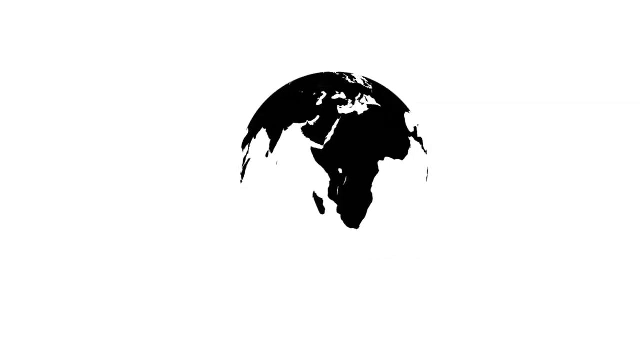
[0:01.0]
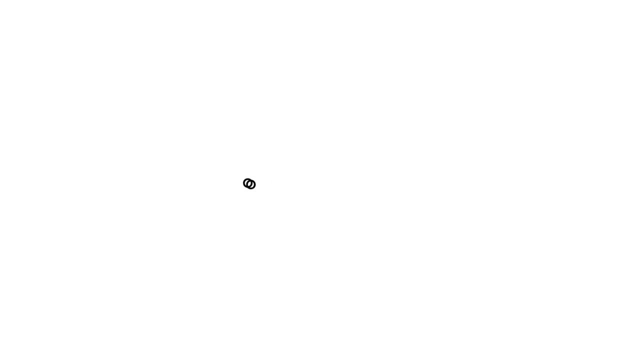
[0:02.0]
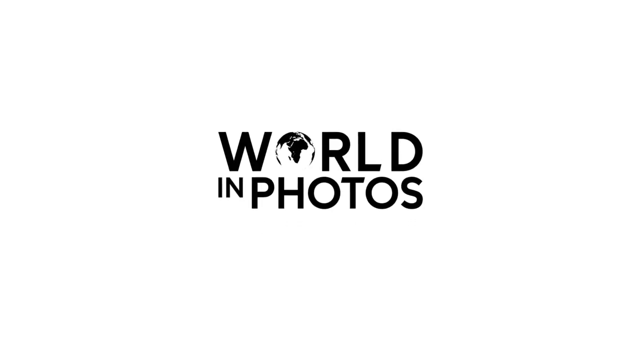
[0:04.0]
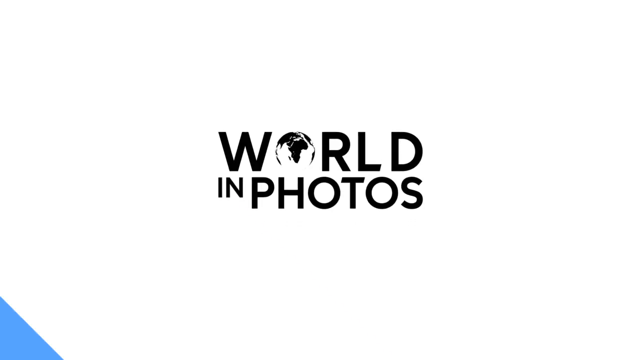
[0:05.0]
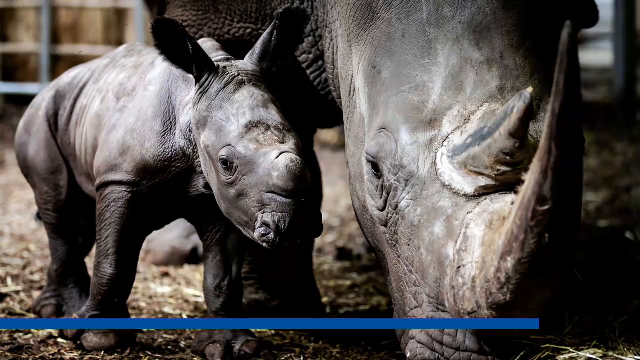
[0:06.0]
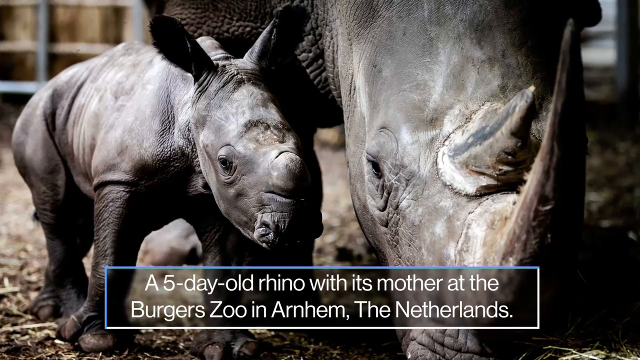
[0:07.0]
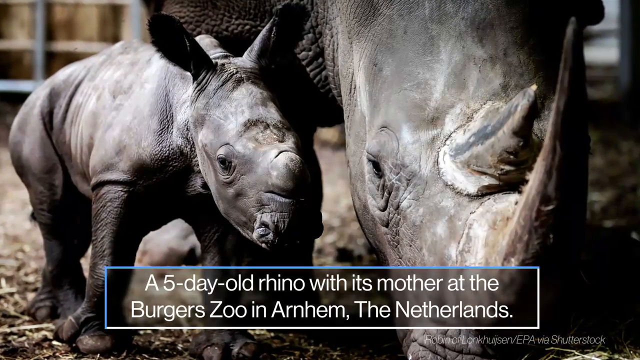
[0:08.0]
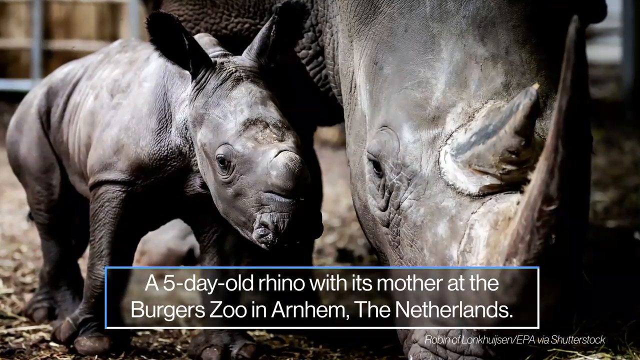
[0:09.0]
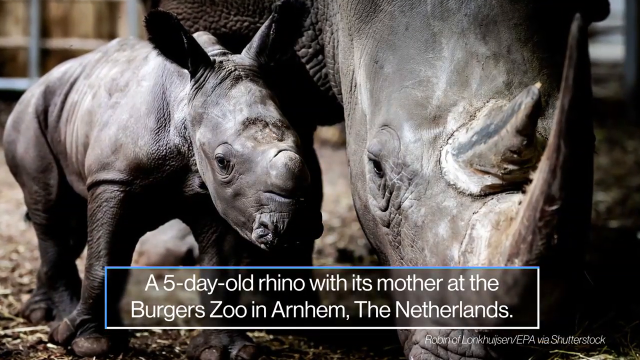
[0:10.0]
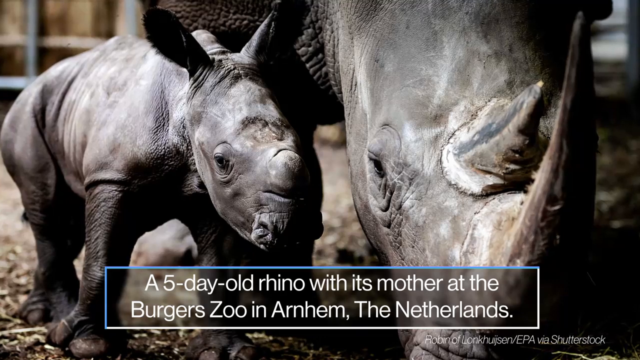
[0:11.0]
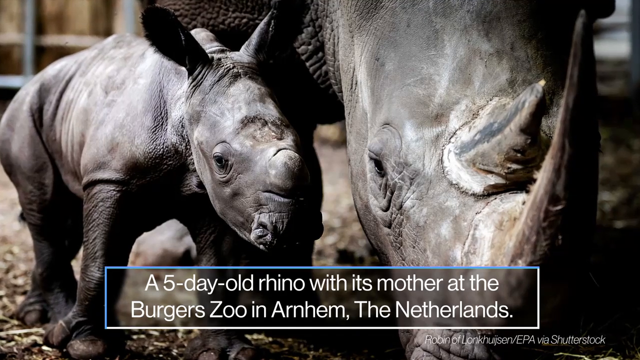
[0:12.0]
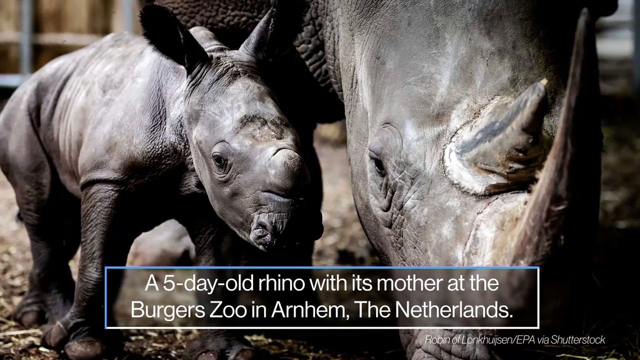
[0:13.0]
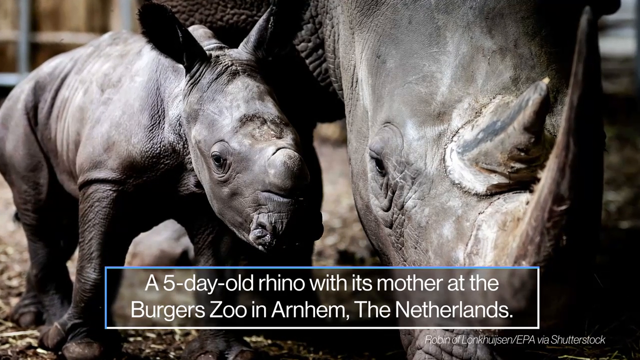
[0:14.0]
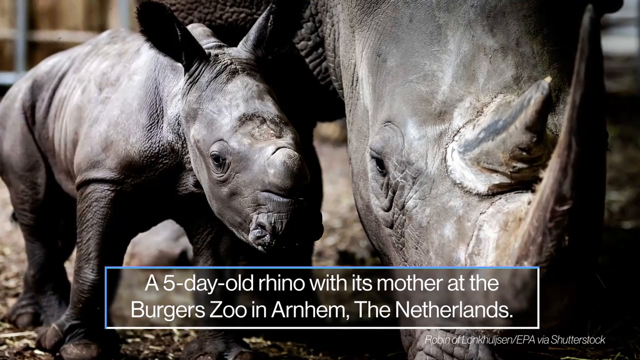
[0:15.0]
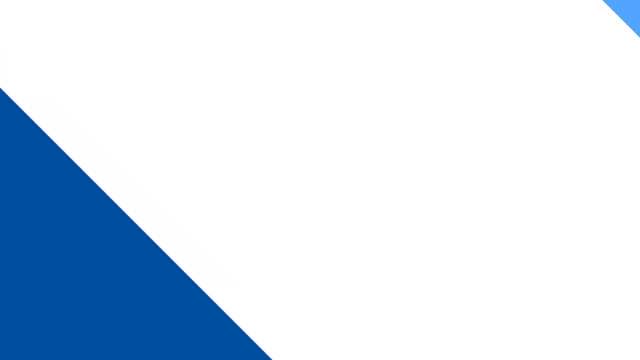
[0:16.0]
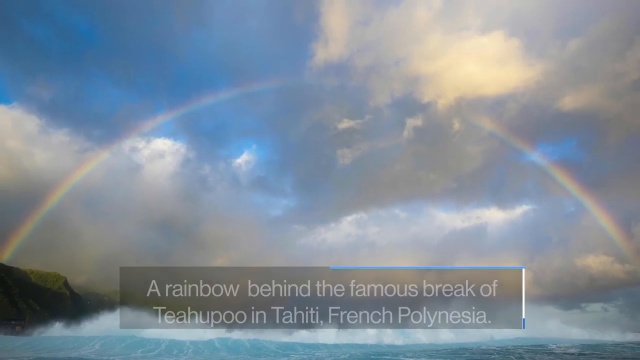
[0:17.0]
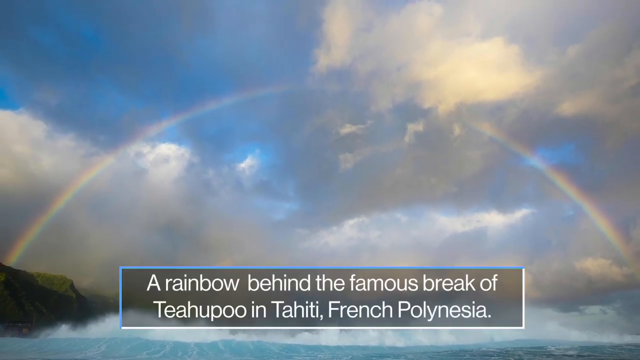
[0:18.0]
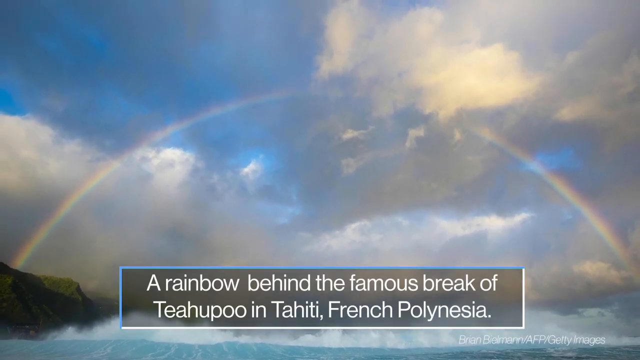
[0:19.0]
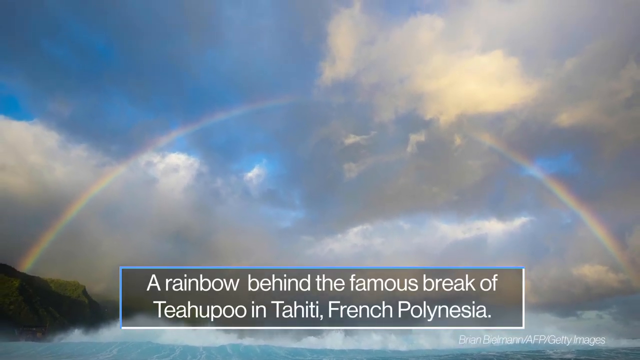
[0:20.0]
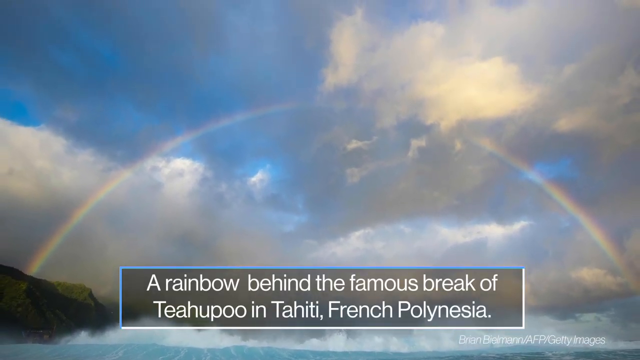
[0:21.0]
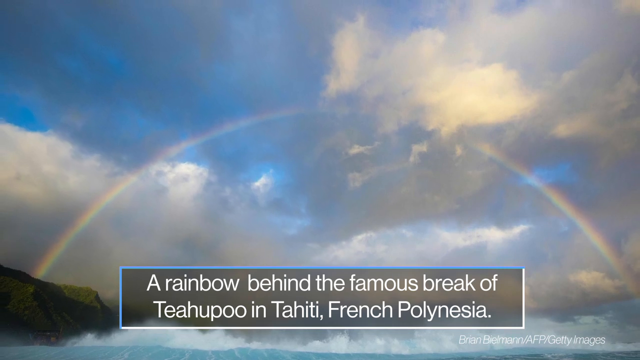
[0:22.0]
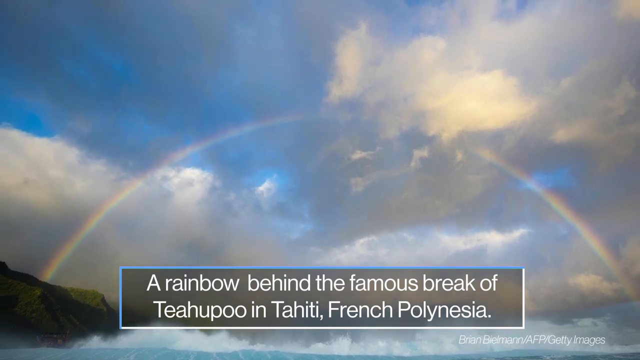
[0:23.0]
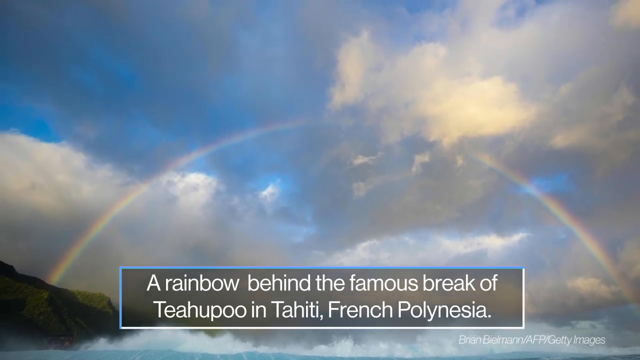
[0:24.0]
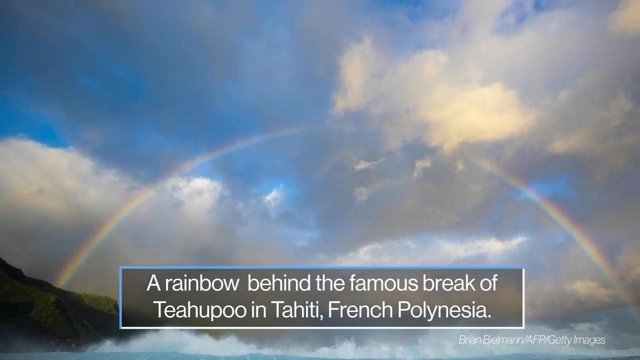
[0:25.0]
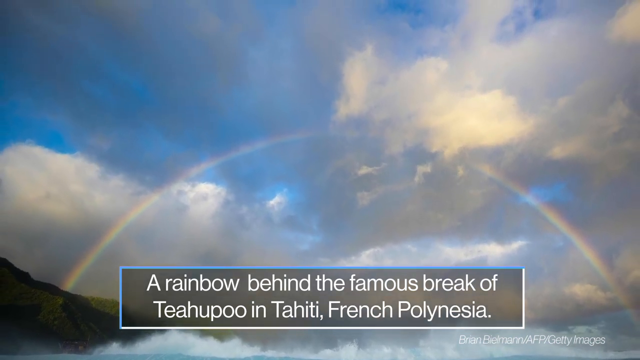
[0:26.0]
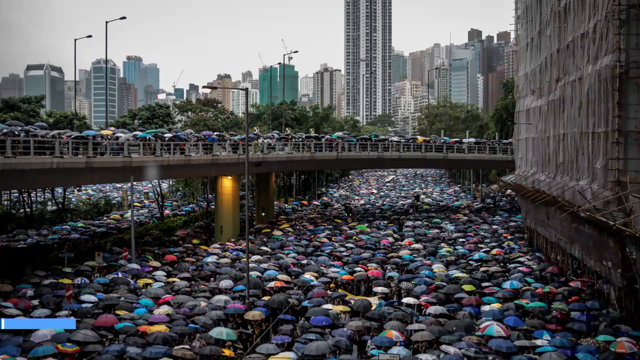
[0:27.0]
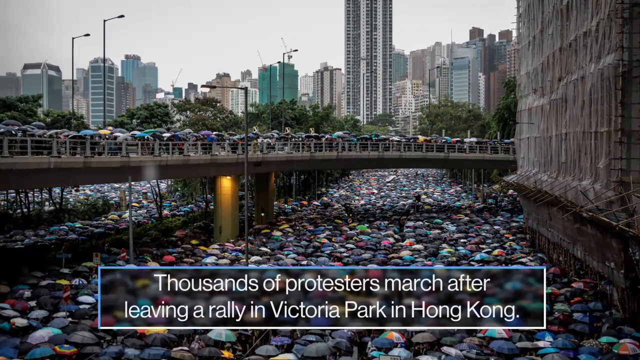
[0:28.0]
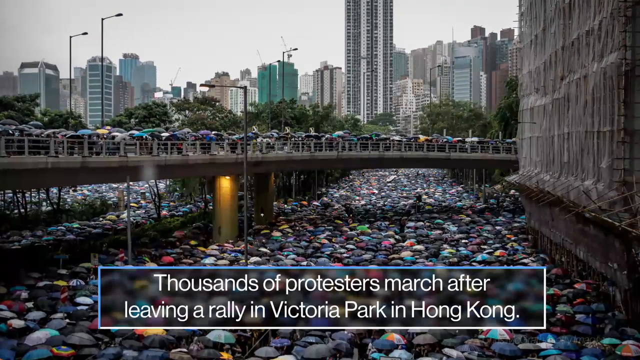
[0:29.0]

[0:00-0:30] The video opens on a white screen with an animation of a spinning globe in the center. The continents on the globe are black, while the water and oceans are white and blend into the background. A small image of what seems to be the view when focusing a camera appears before two dots move into the center of the screen. The dots turn into the letter O's inside a caption that says "world in photos." A photo then shows a mother rhino and a younger rhino inside an enclosure, with a banner underneath that says "a five day old rhino with its mother at the Berger Zoo in Arnheim The Netherlands." A blue line comes across the screen and turns a darker blue, bringing another photo onto the screen: a large rainbow.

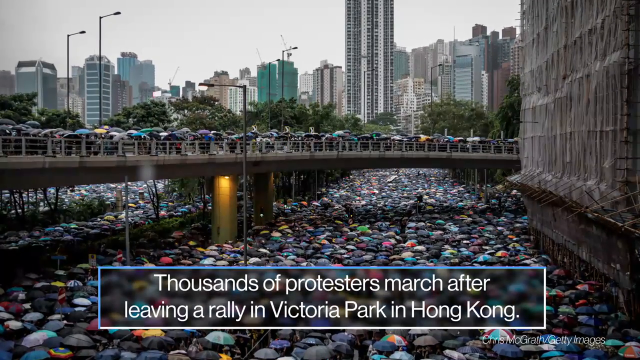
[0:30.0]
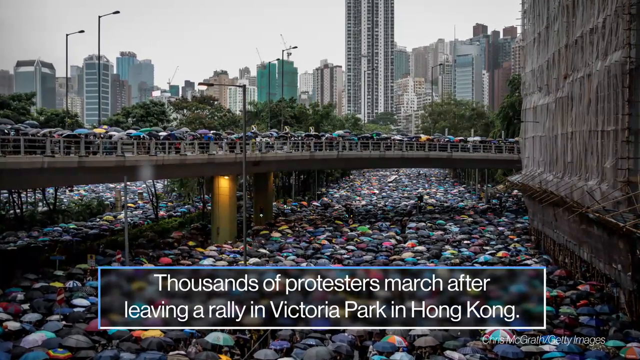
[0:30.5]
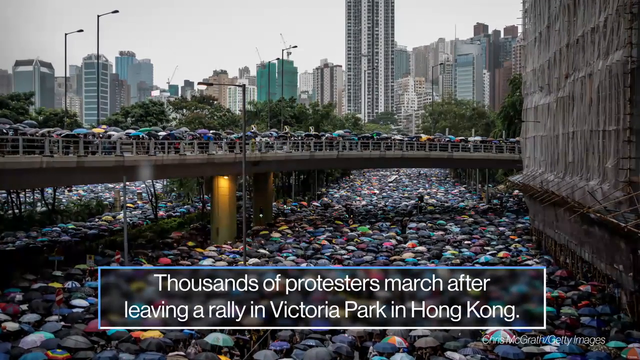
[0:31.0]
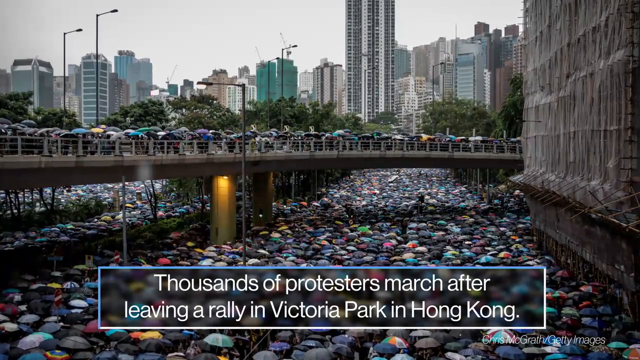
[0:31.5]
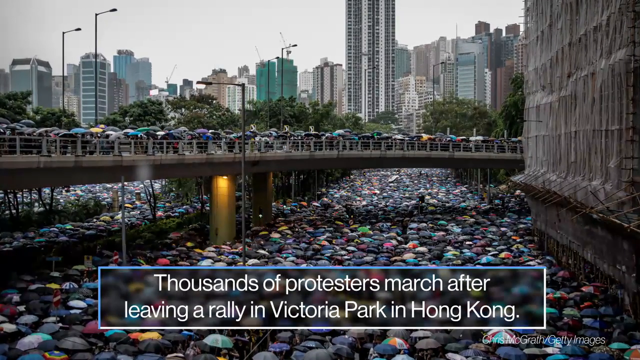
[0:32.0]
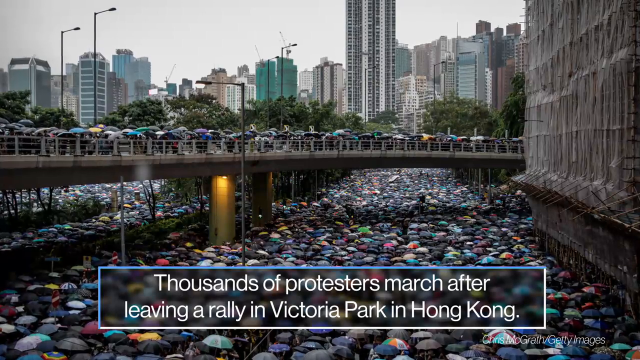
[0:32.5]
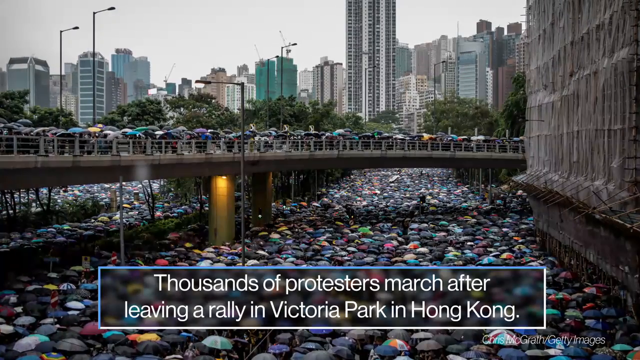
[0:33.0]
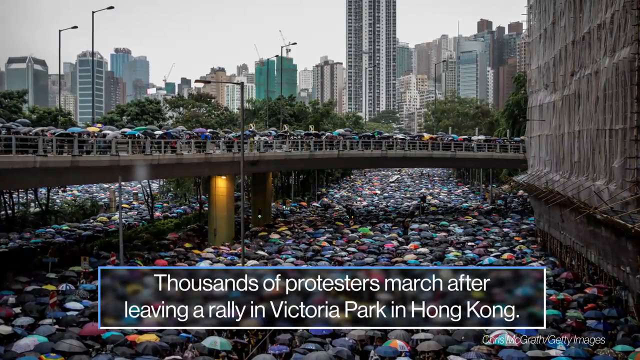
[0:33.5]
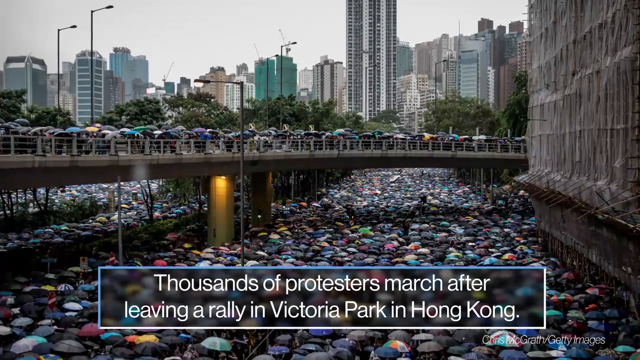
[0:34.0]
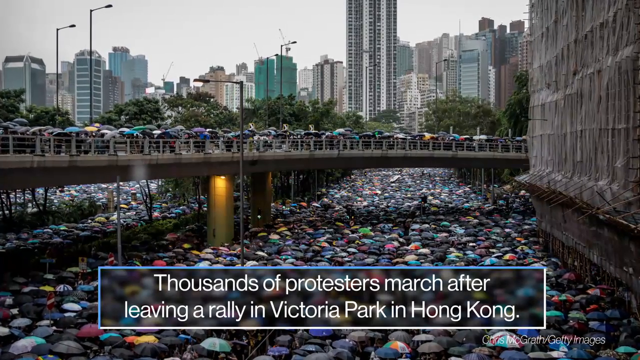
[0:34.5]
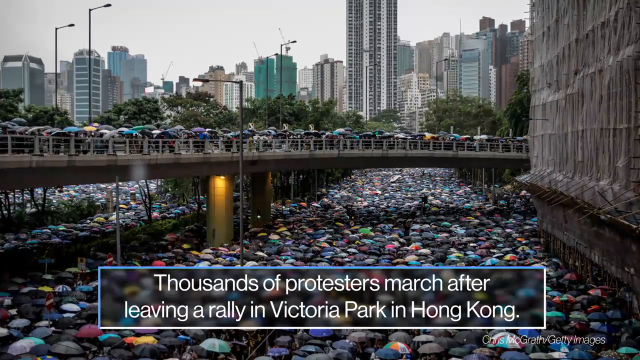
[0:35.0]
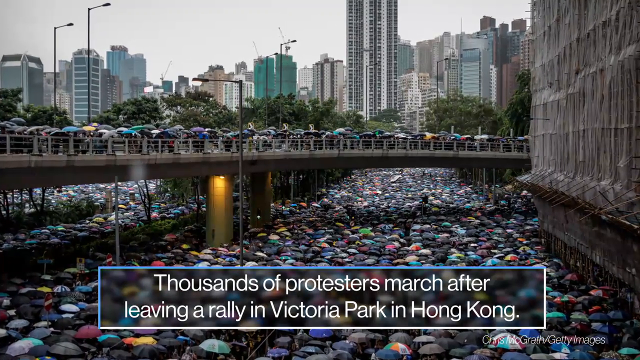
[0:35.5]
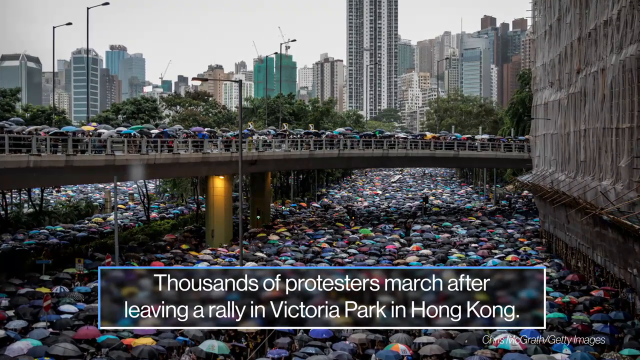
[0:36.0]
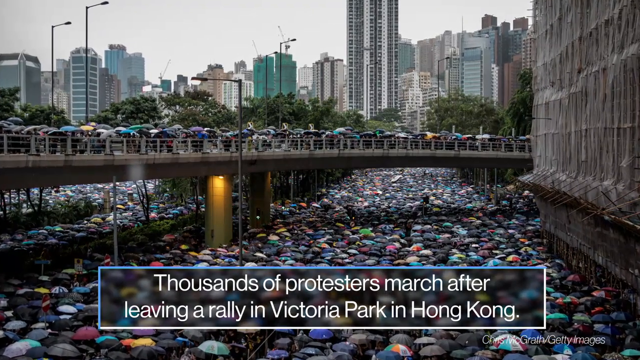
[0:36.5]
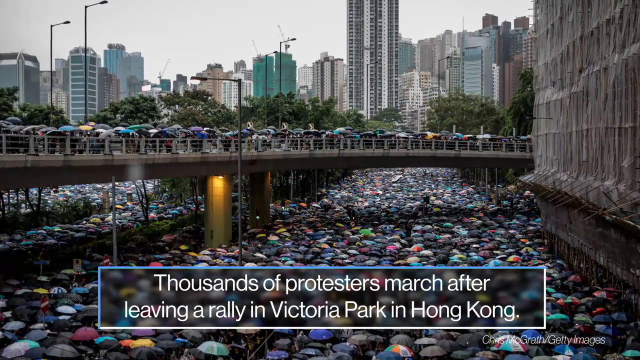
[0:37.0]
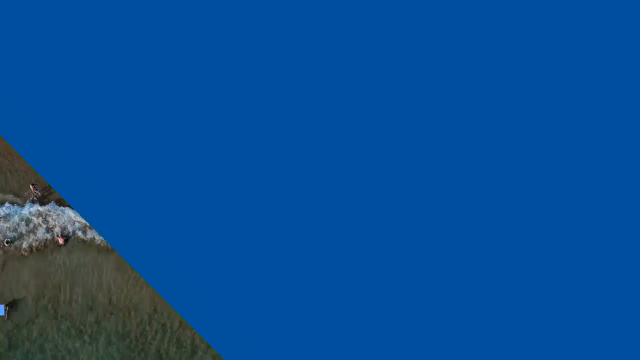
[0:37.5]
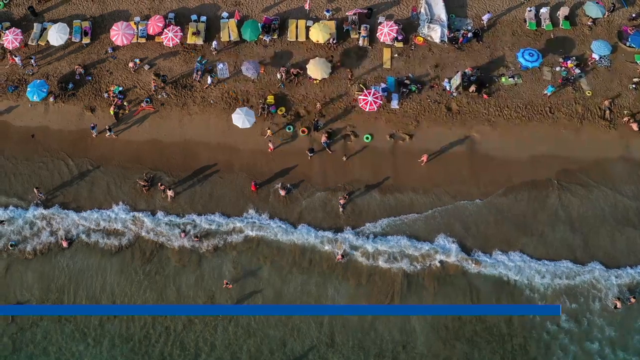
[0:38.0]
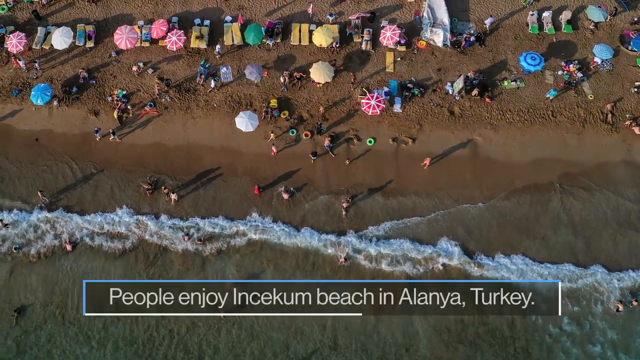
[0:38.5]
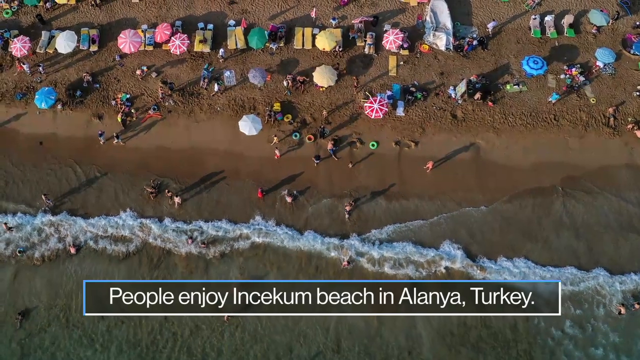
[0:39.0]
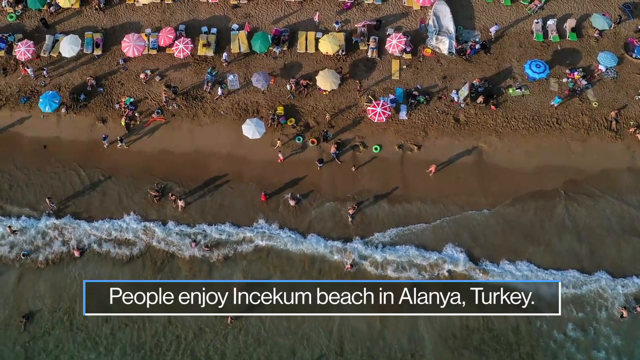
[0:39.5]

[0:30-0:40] A large city street with a bridge over it is shown. Many people are packed tightly in the roads underneath as well as on the bridge. On the right is a building that looks like it is being built, with scaffolding and plastic lining on the outside. The people standing in the roadway form a sea of umbrellas. The caption reads "Thousands of protesters march after leaving a rally in Victoria Park in Hong Kong." Next, an aerial view of a beach shows colorful umbrellas on the sand and people walking and swimming in the water.